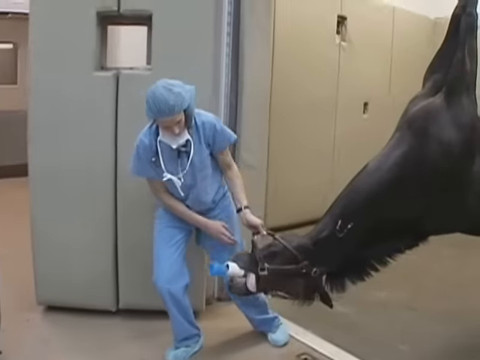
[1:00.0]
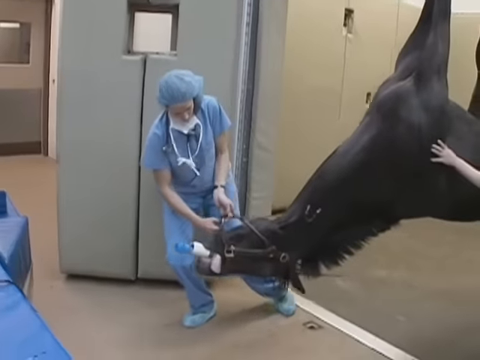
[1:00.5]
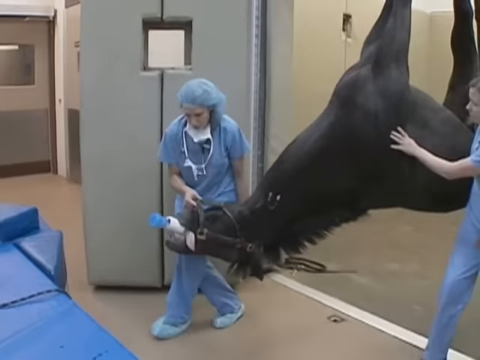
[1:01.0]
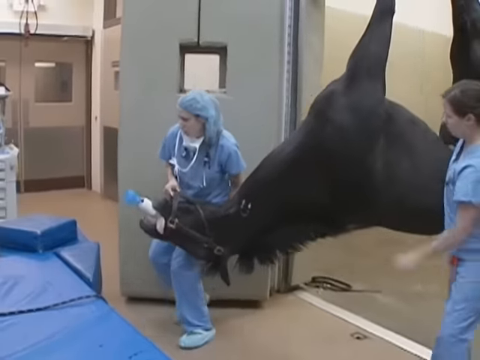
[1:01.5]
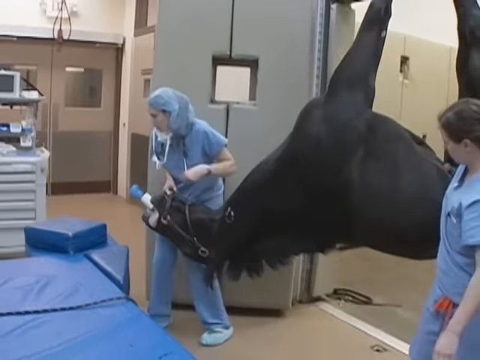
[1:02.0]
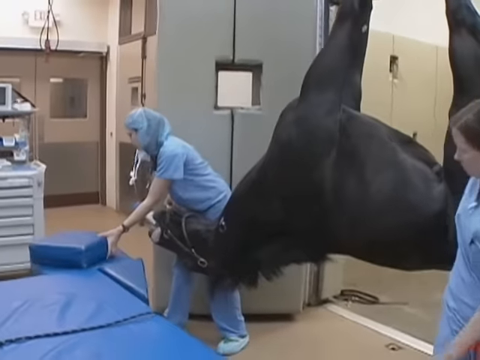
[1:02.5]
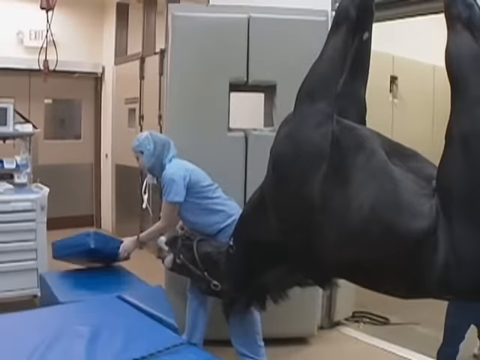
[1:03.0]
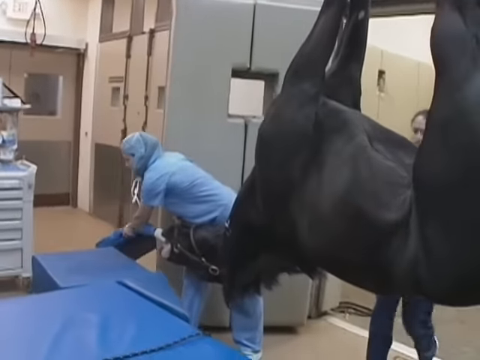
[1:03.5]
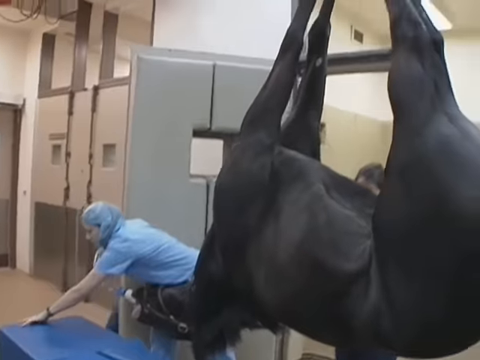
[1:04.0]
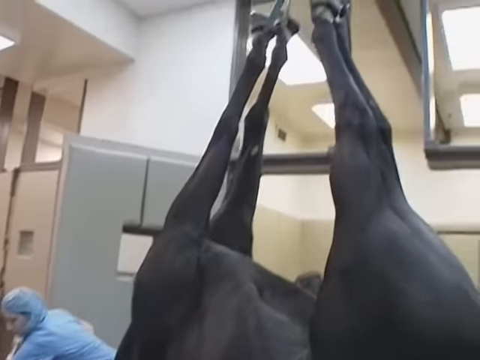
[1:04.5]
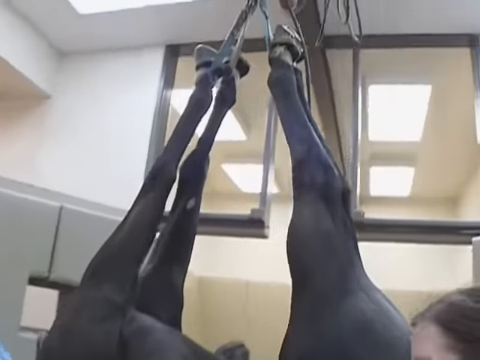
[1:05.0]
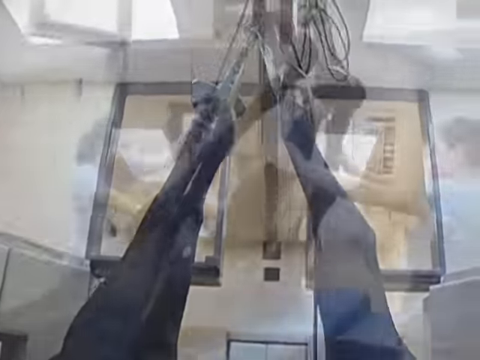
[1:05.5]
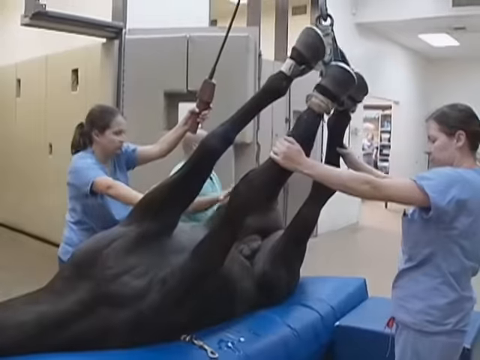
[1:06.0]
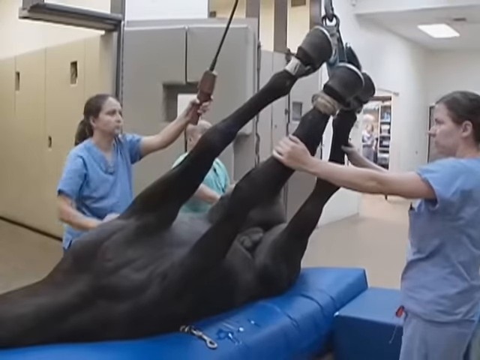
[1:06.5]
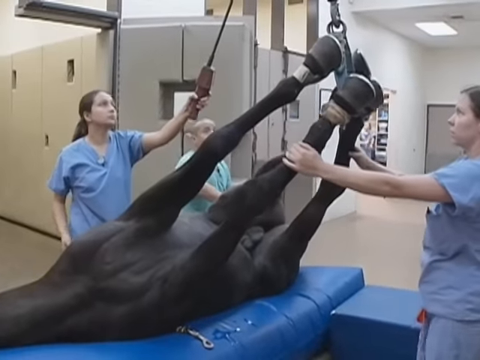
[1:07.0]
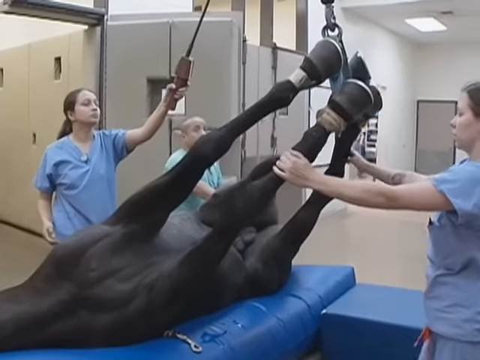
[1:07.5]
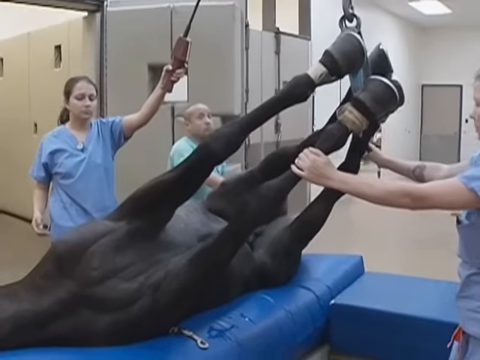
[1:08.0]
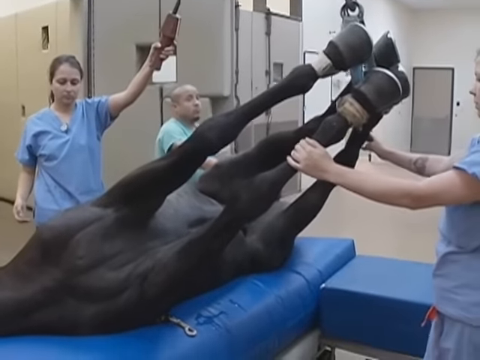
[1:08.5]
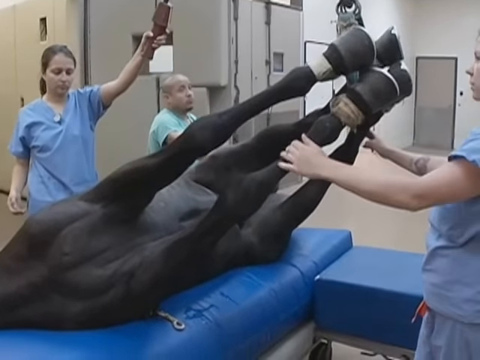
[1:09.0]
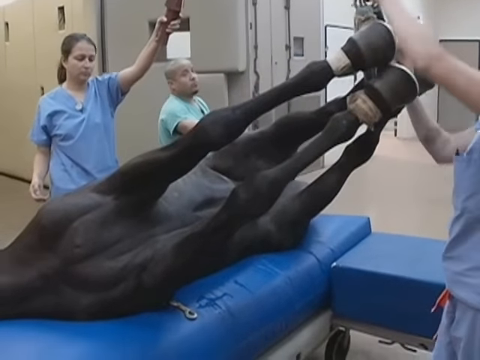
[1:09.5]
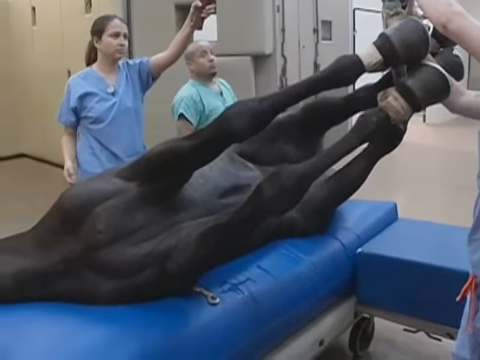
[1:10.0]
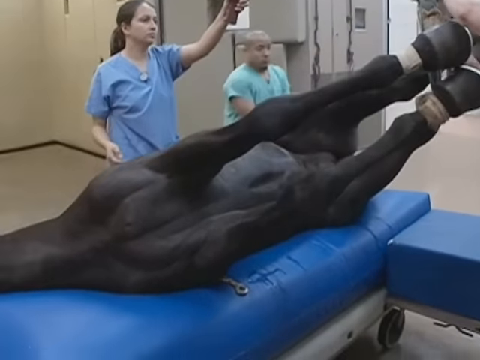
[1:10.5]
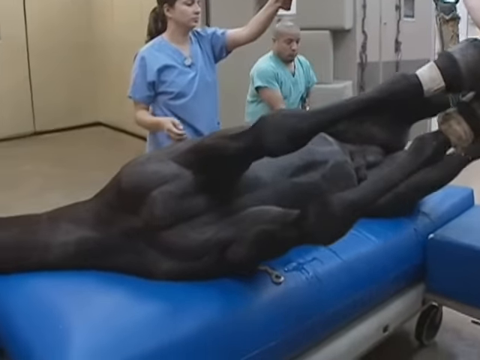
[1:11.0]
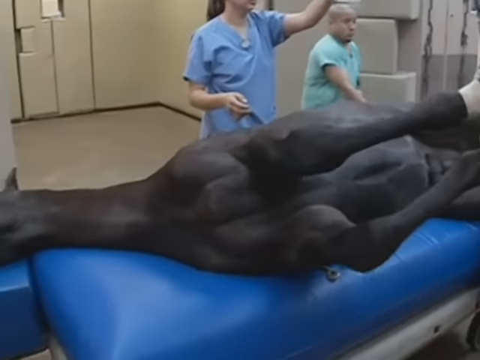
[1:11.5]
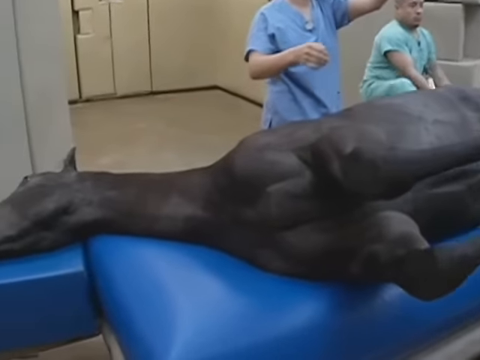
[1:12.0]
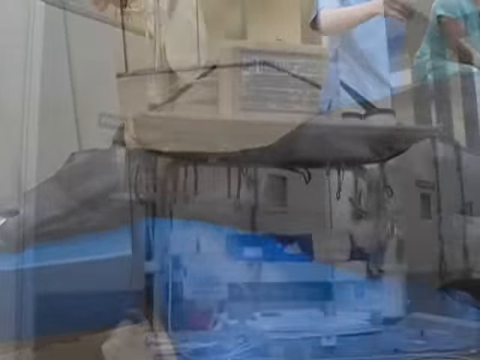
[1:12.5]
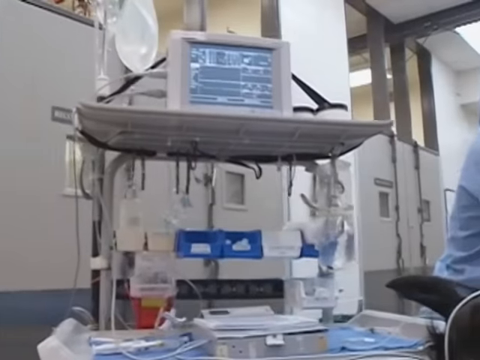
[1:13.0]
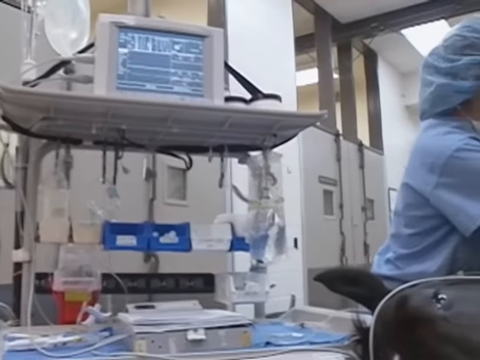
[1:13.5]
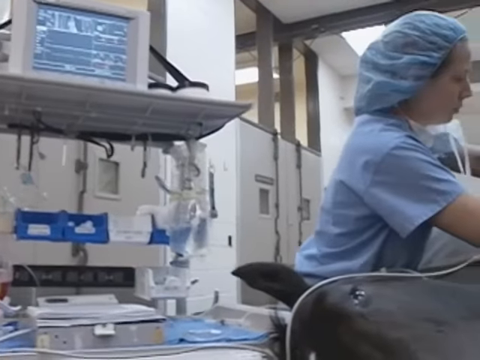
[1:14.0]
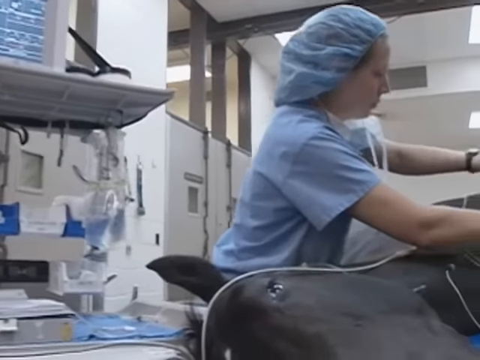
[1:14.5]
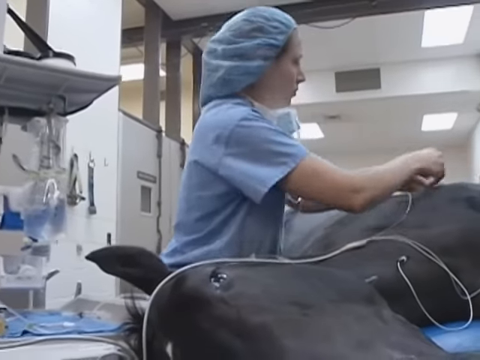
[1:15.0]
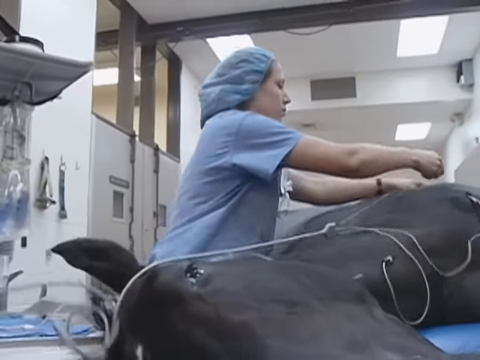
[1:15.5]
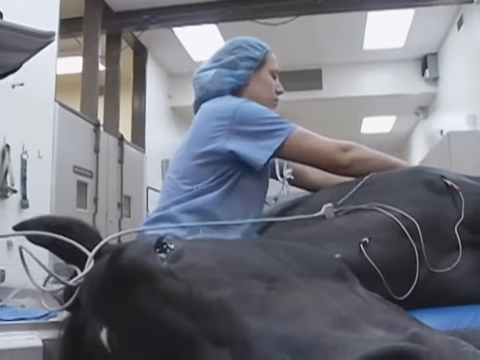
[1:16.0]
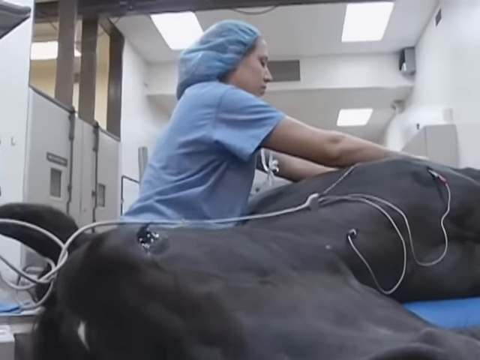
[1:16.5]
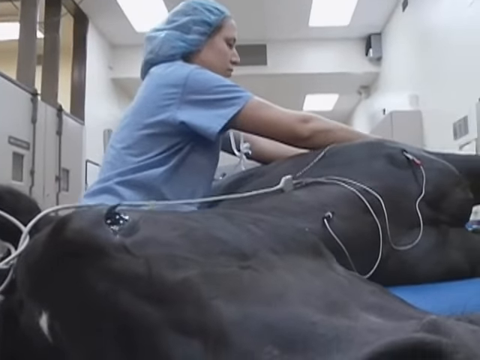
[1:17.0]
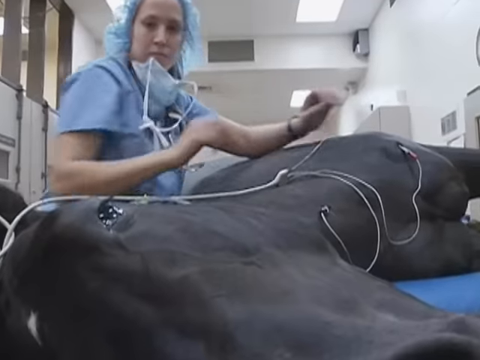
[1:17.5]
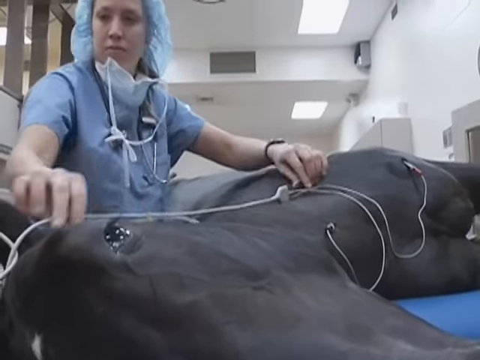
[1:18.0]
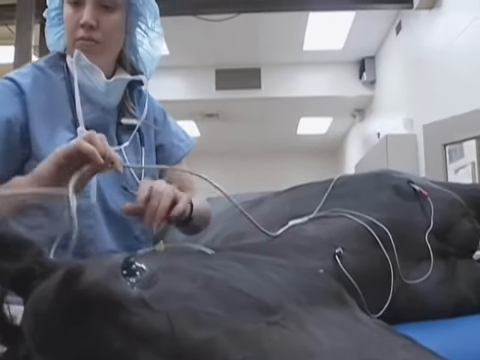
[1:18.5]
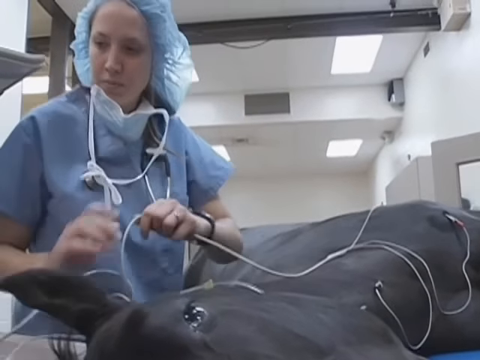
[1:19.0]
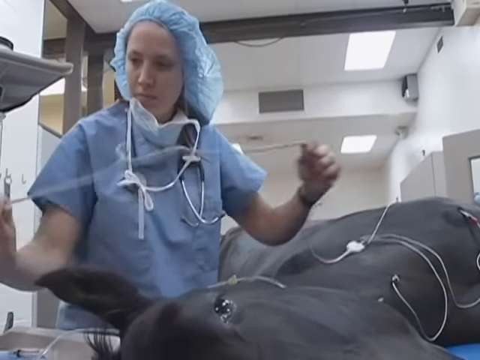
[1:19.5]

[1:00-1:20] The horse hangs from some sort of device by its feet, suspended in the air by its hooves in some type of harness device. It is hoisted up and moved or slid along a track, with the hospital or veterinary staff helping the horse along. It is then laid down on its side onto a heavily padded table with some type of blue padding. A technician or veterinarian hooks up monitors to the horse, with wires running to the horse's chest, probably to monitor its vital signs.